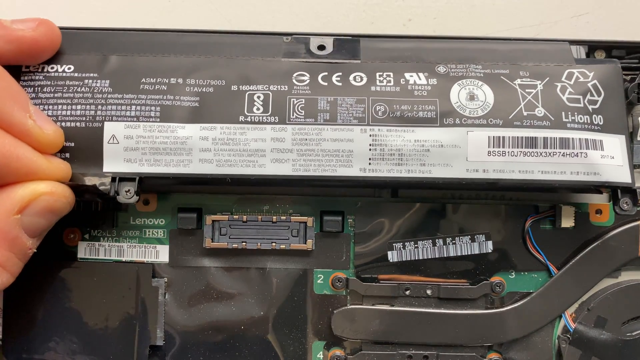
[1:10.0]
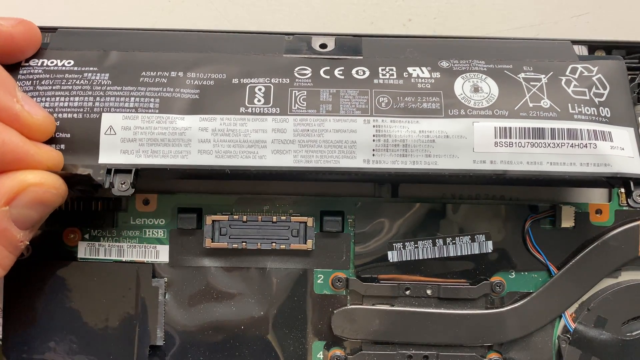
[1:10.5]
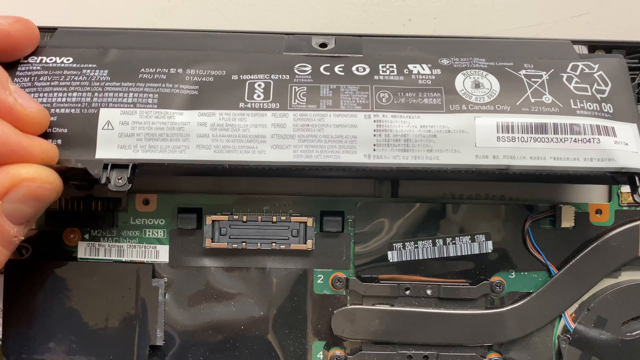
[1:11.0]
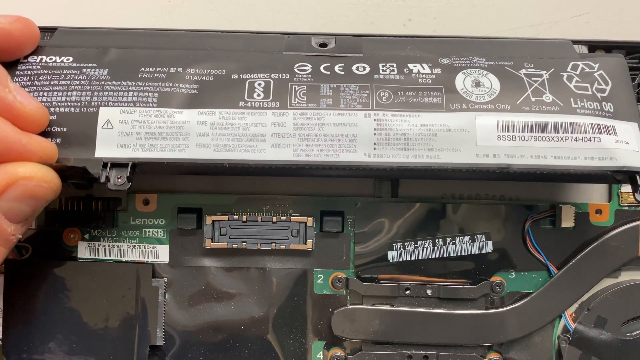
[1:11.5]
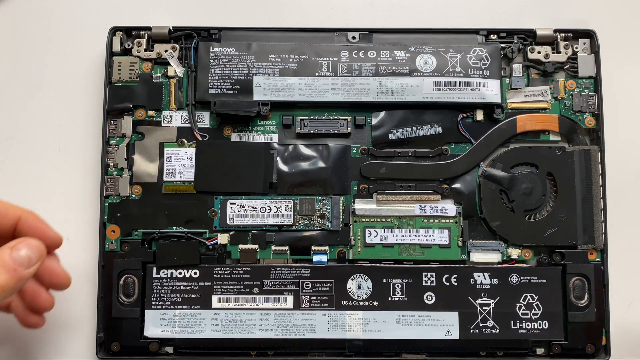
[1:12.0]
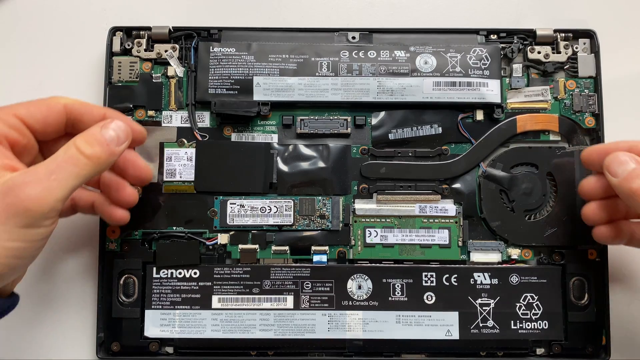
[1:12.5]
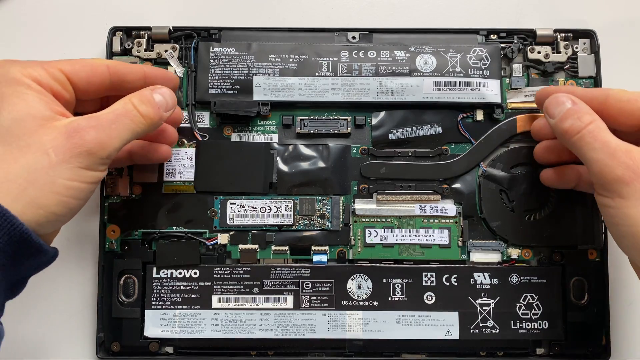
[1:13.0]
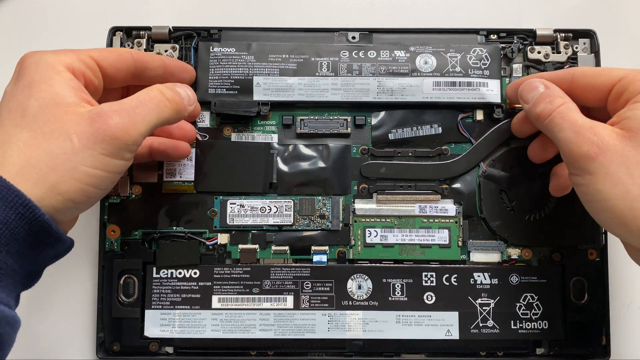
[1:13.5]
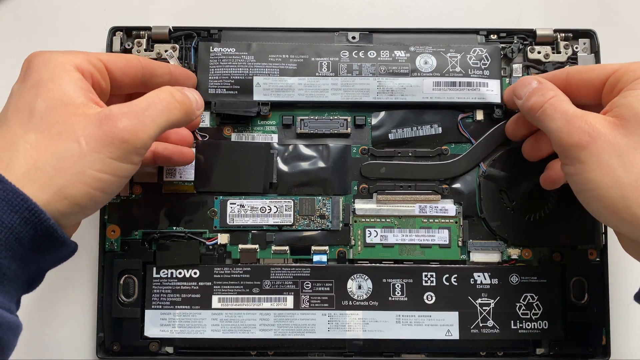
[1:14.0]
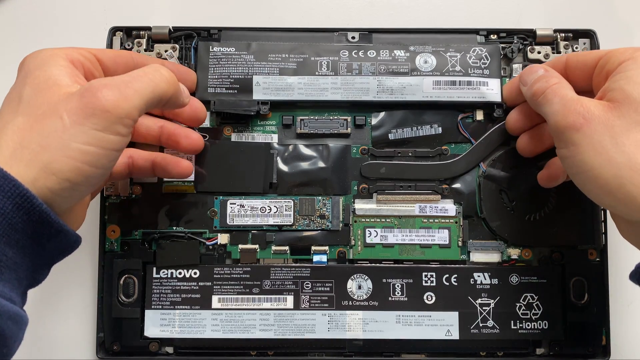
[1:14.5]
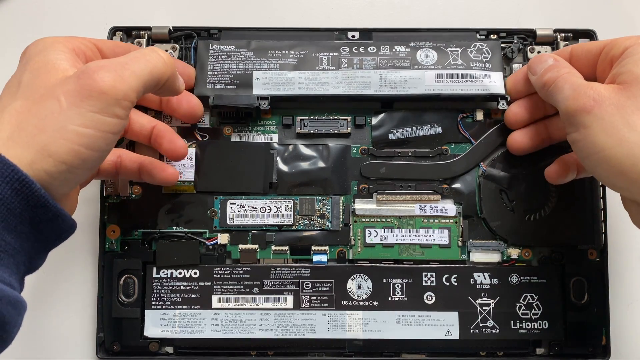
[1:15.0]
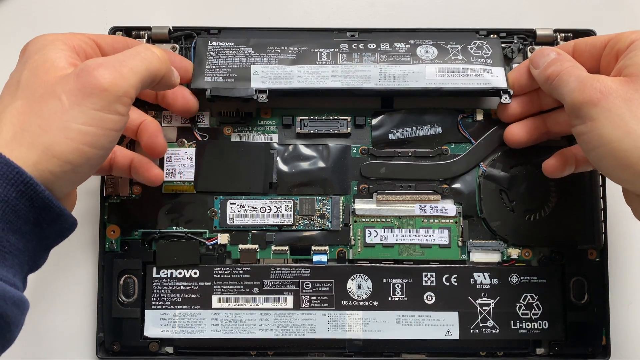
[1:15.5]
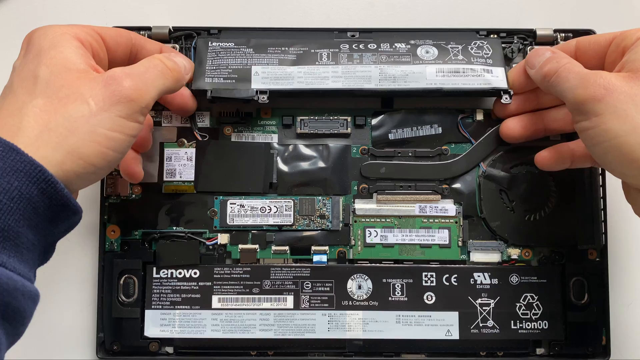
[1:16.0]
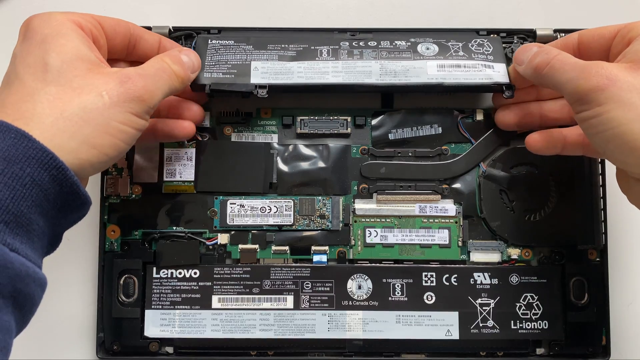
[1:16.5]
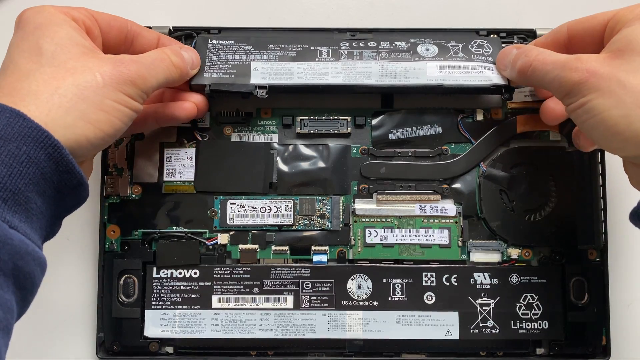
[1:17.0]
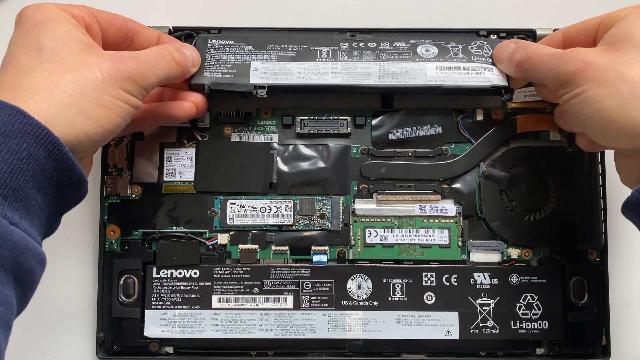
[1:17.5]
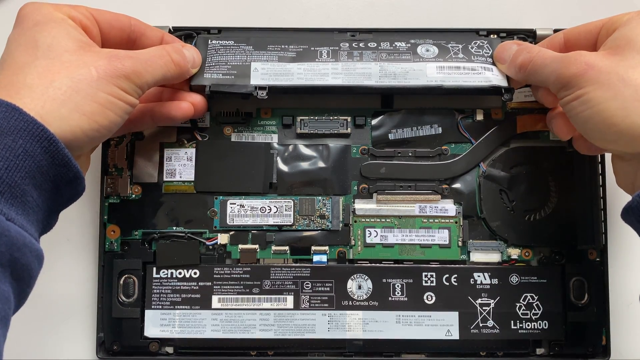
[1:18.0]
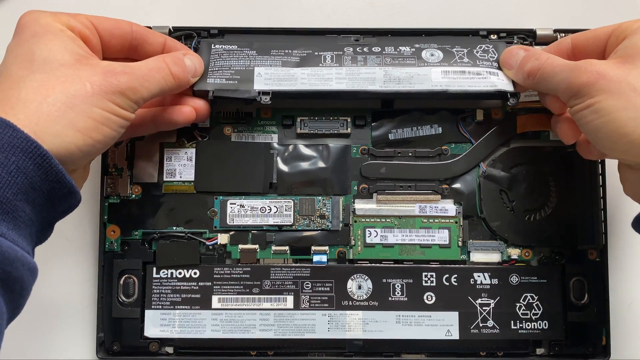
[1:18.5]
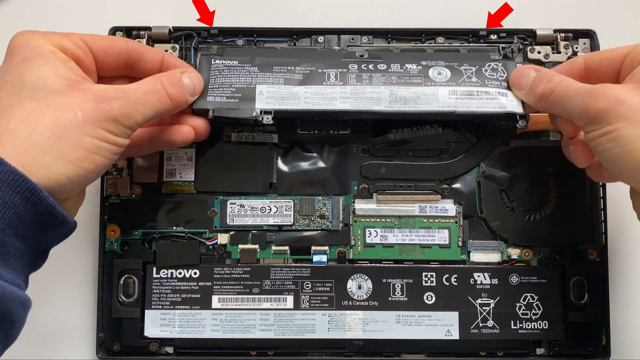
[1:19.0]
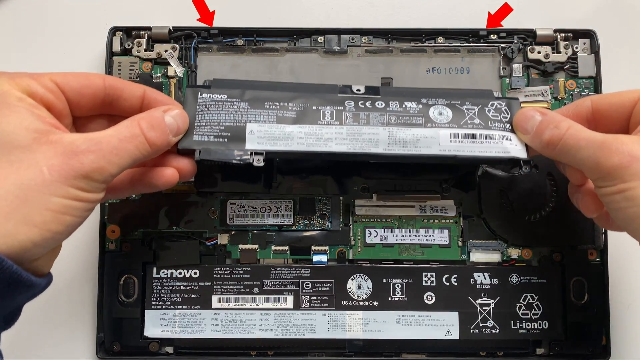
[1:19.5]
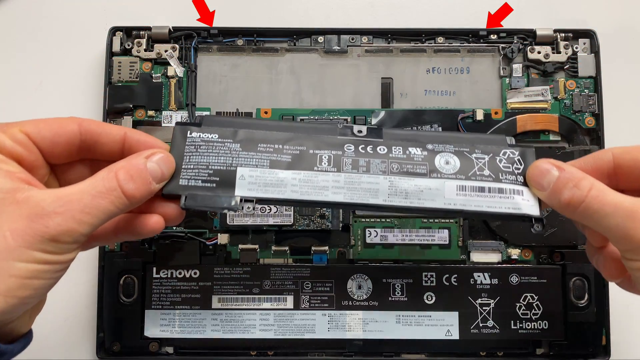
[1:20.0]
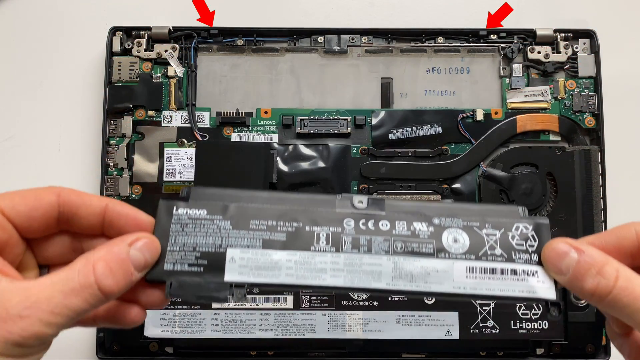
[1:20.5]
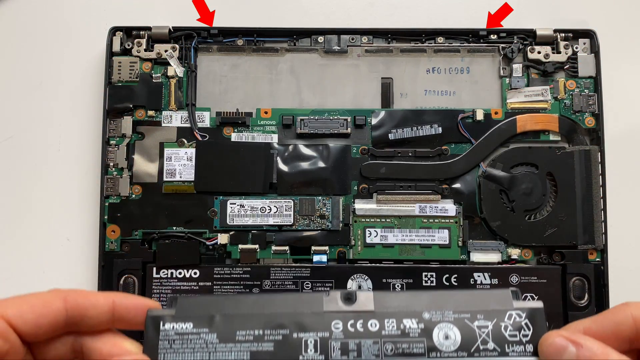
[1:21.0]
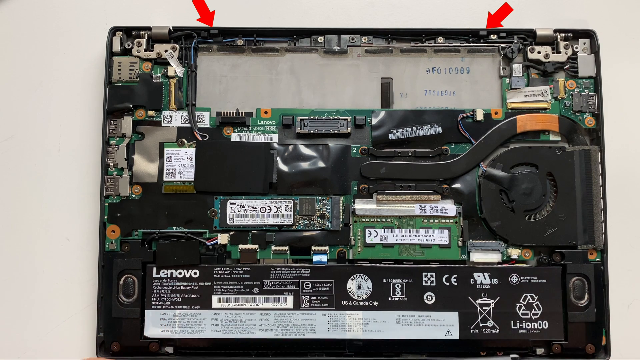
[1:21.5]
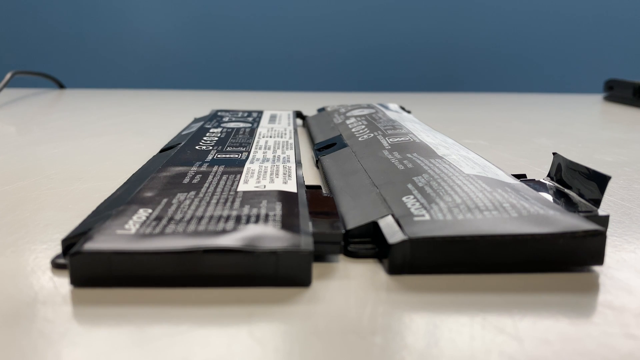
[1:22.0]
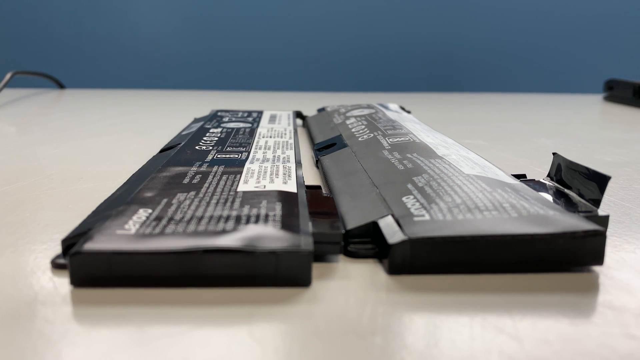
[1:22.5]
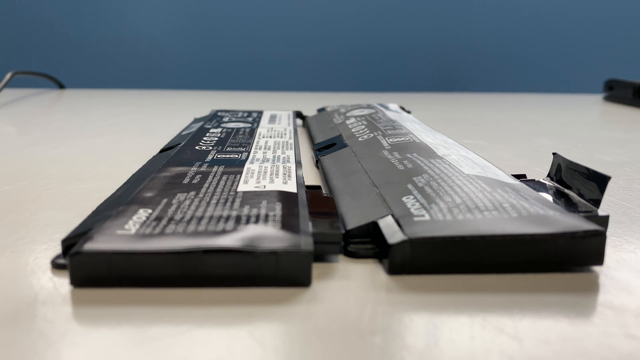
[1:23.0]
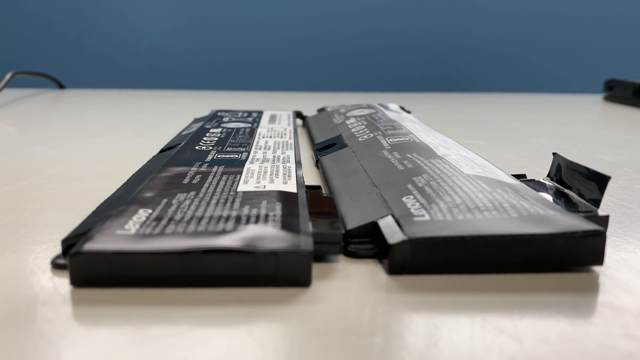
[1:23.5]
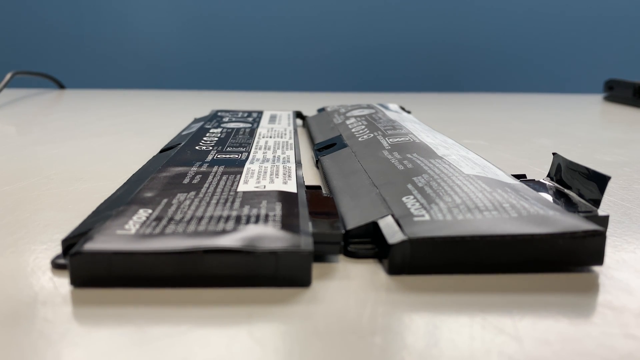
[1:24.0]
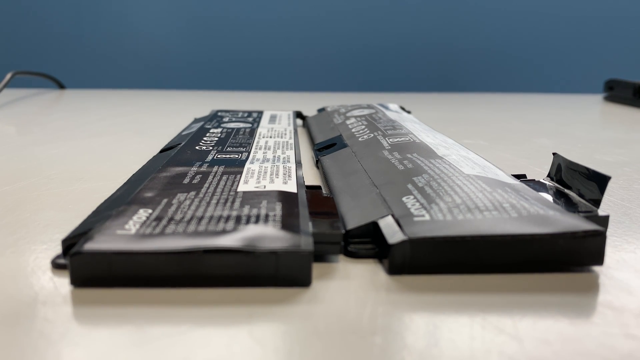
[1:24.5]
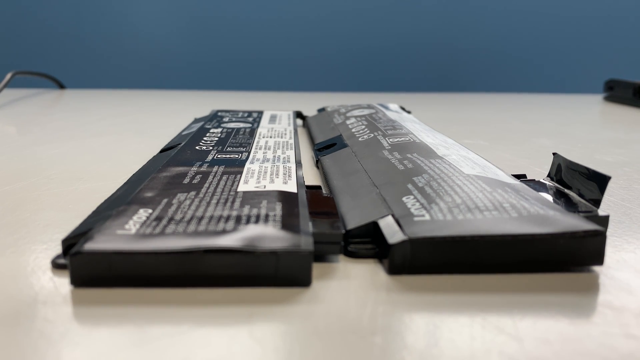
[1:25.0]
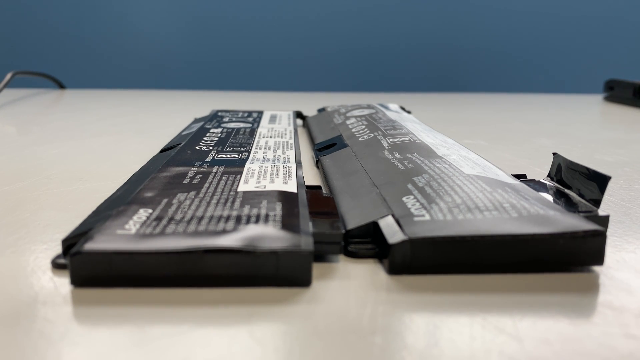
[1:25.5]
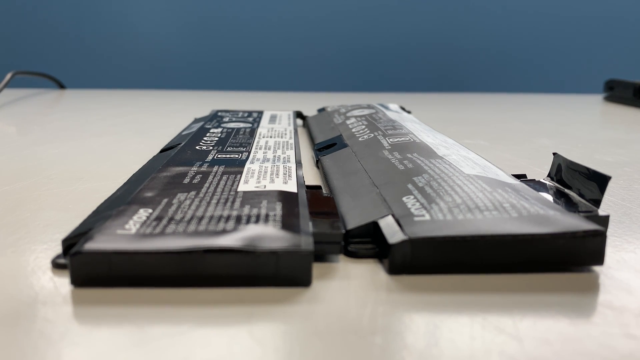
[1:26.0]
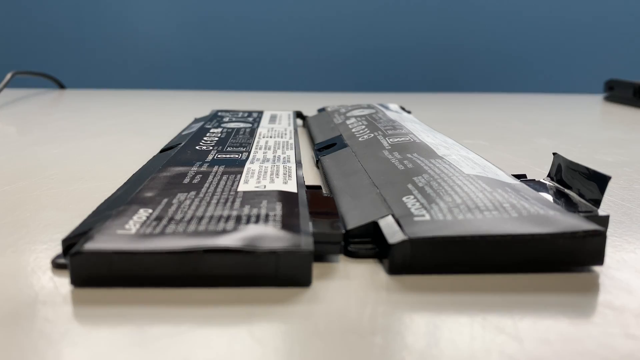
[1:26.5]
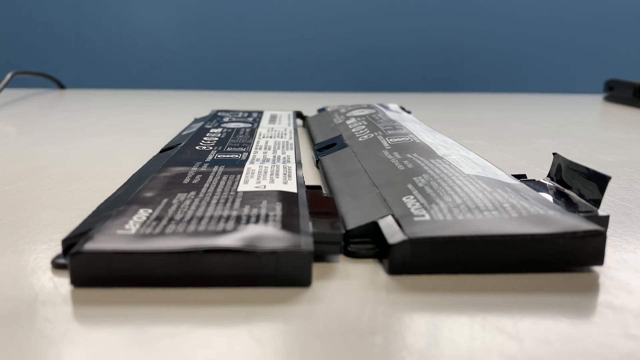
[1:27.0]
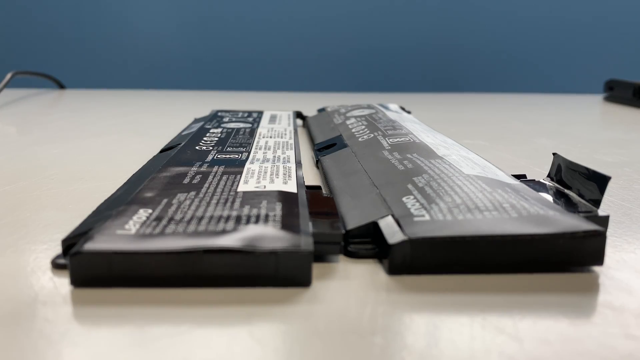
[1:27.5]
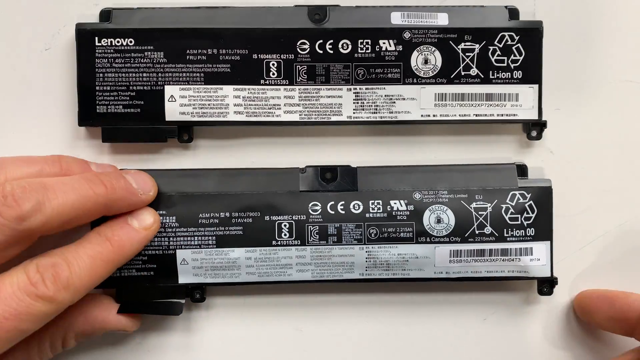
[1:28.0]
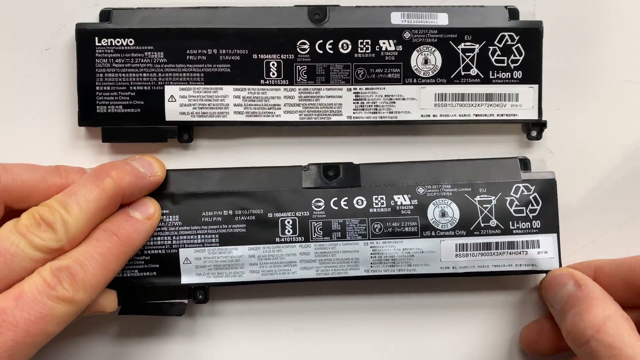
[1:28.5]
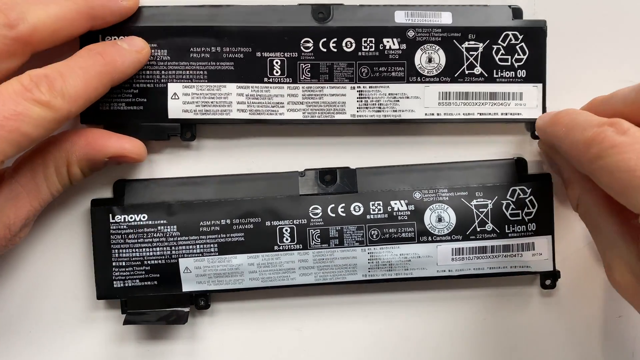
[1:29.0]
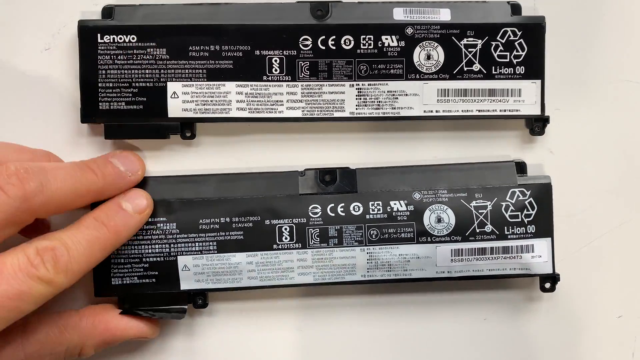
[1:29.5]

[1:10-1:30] The man is trying to replace the long black Lenovo piece, which is apparently a battery. The laptop is a Windows Dell laptop, possibly with a Lenovo battery. The possibly young man replacing the Lenovo part wears a blue dress shirt.